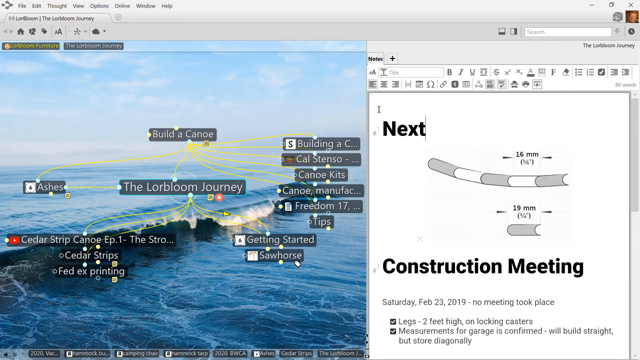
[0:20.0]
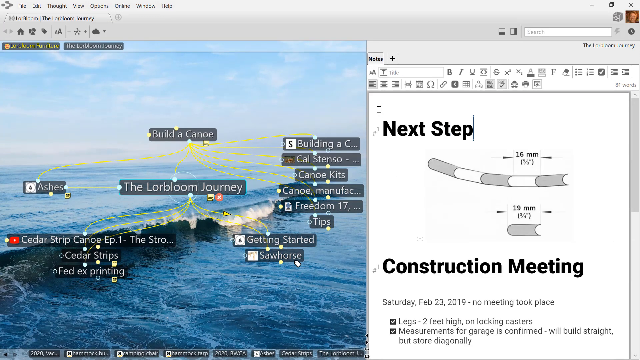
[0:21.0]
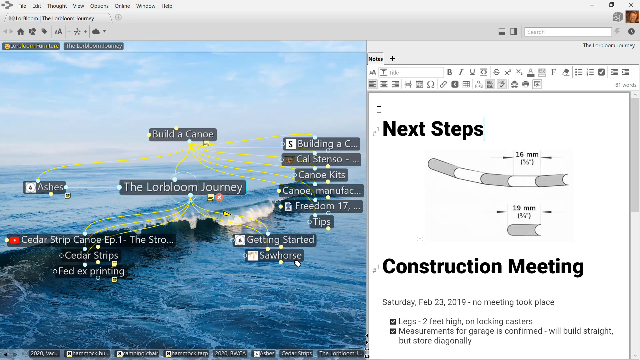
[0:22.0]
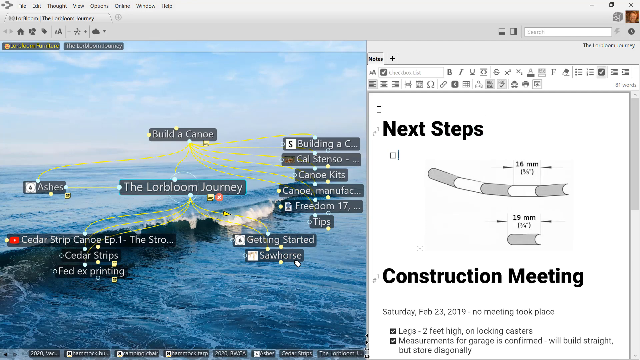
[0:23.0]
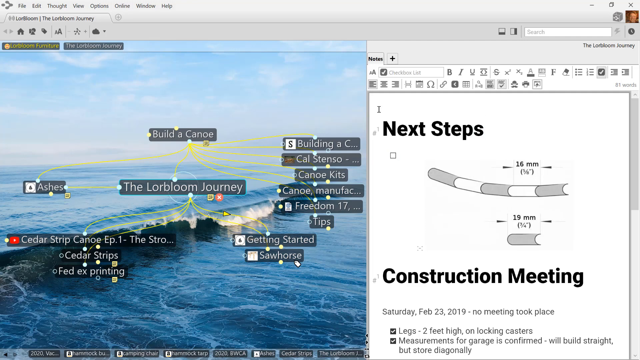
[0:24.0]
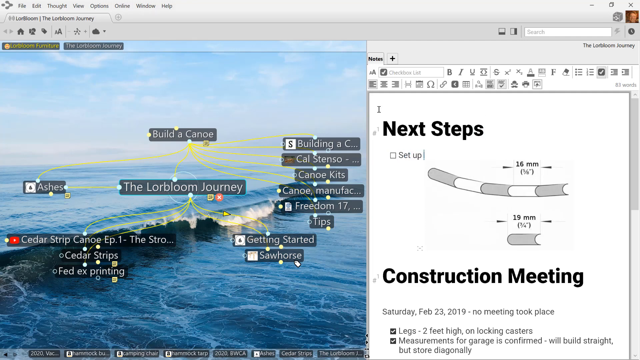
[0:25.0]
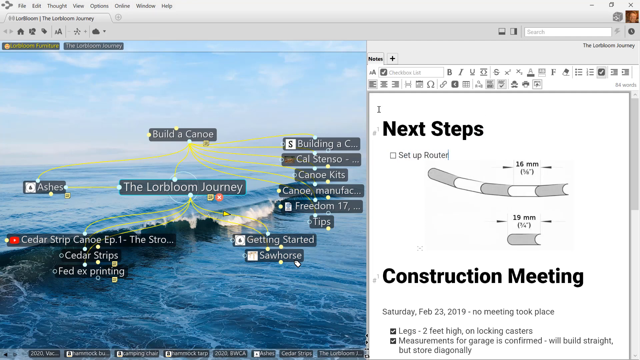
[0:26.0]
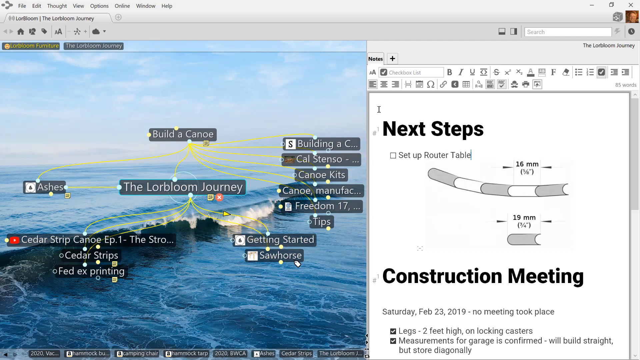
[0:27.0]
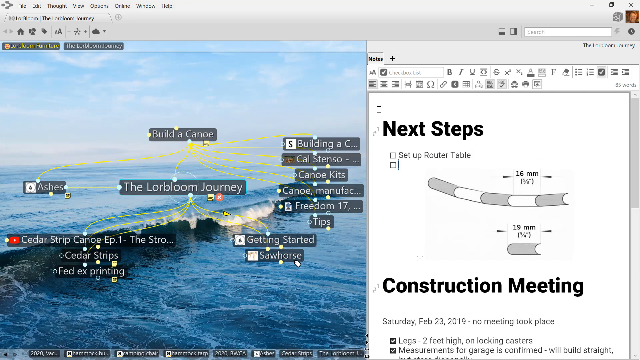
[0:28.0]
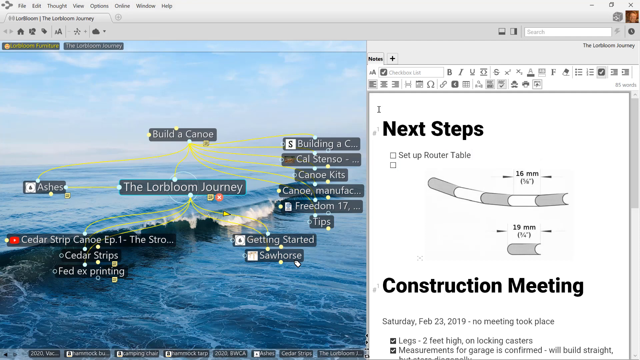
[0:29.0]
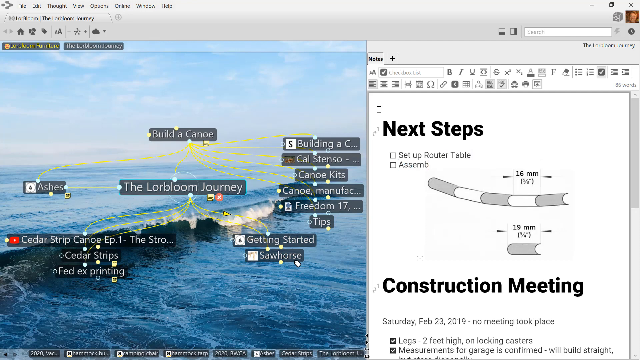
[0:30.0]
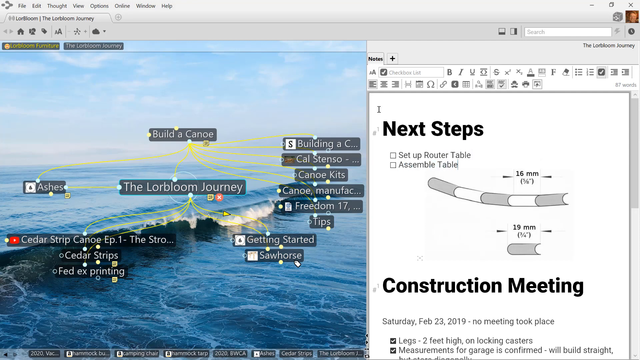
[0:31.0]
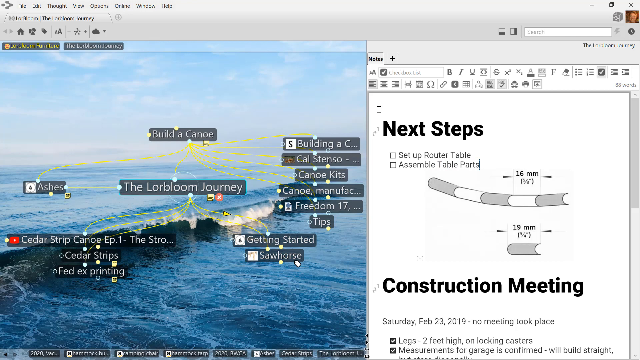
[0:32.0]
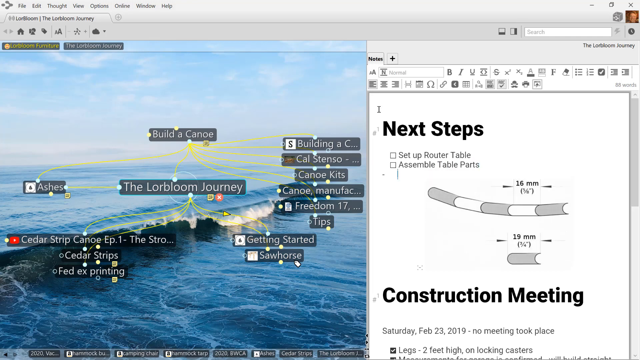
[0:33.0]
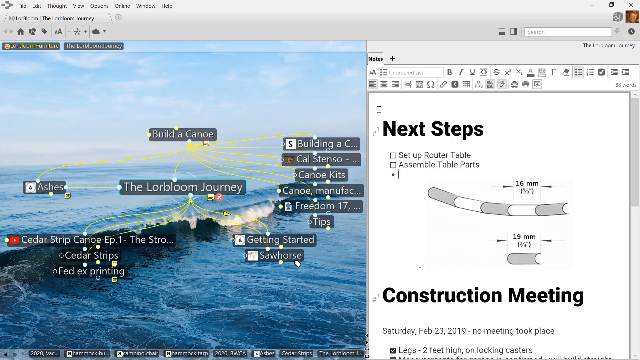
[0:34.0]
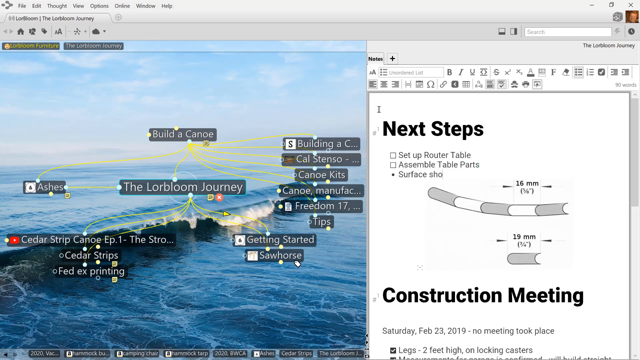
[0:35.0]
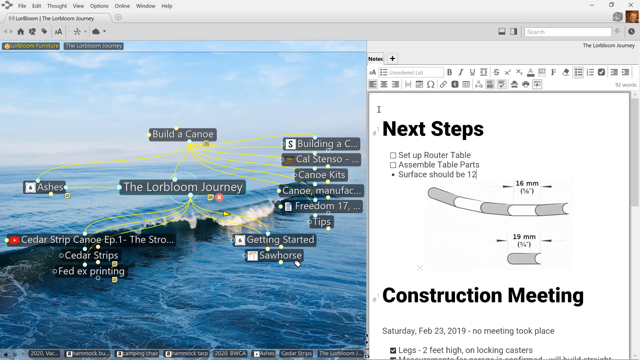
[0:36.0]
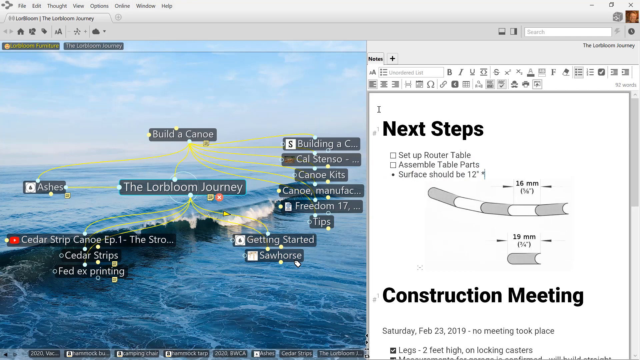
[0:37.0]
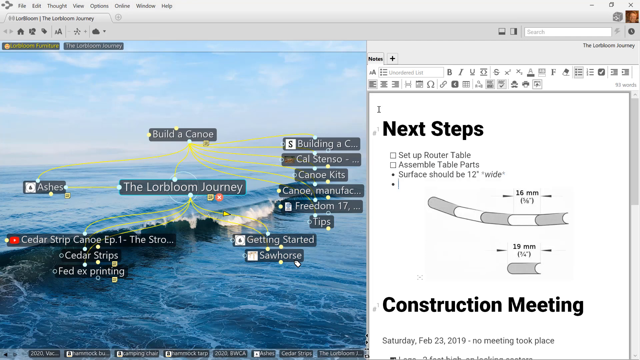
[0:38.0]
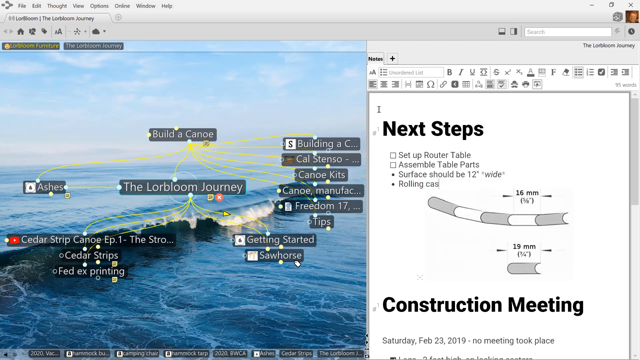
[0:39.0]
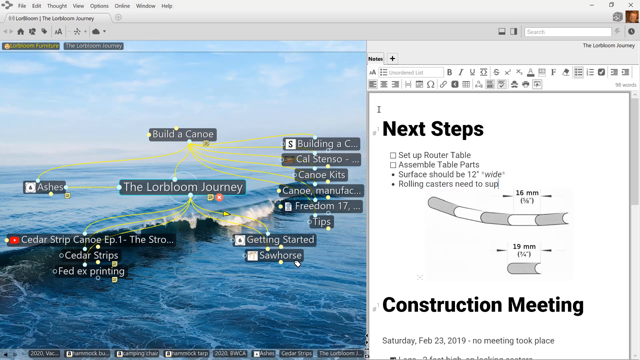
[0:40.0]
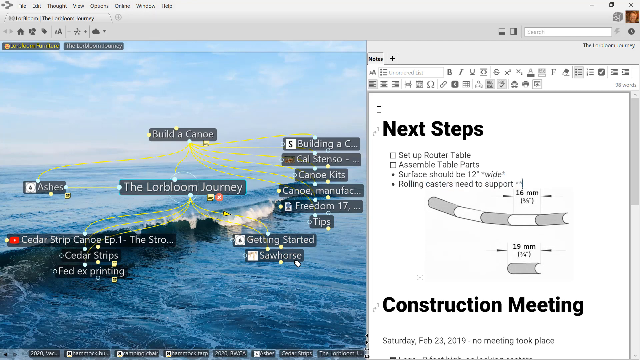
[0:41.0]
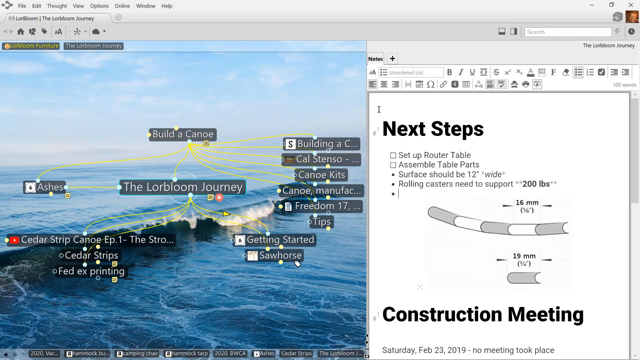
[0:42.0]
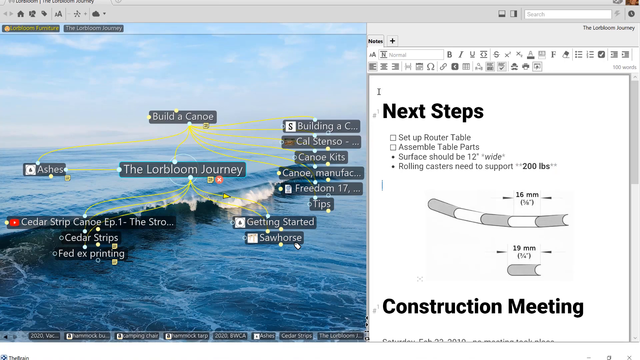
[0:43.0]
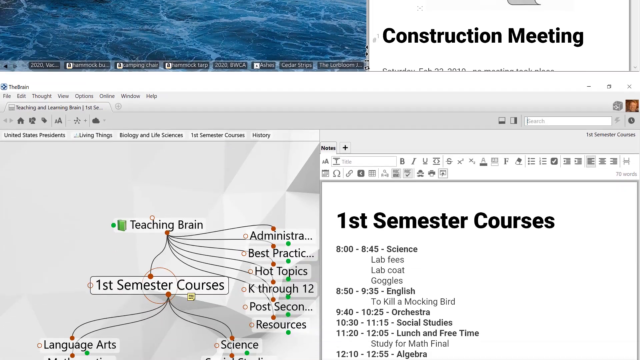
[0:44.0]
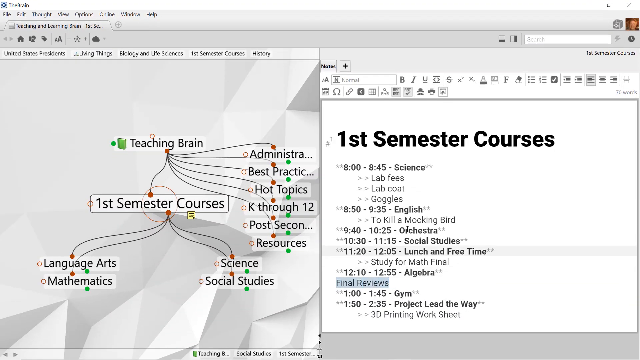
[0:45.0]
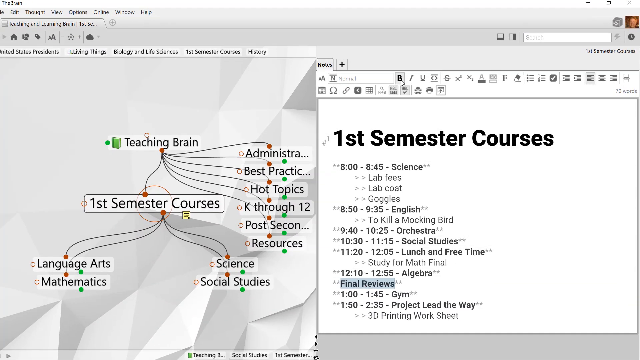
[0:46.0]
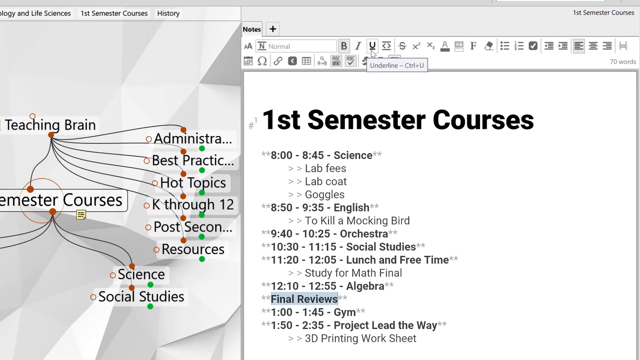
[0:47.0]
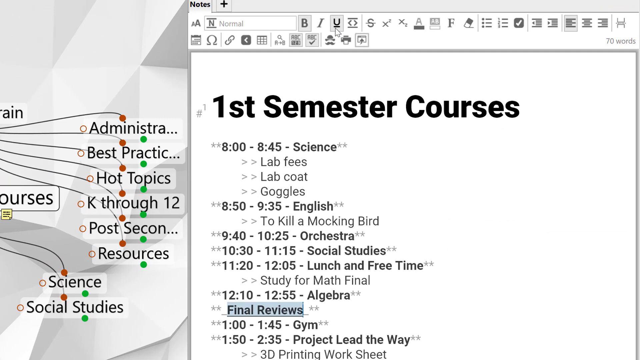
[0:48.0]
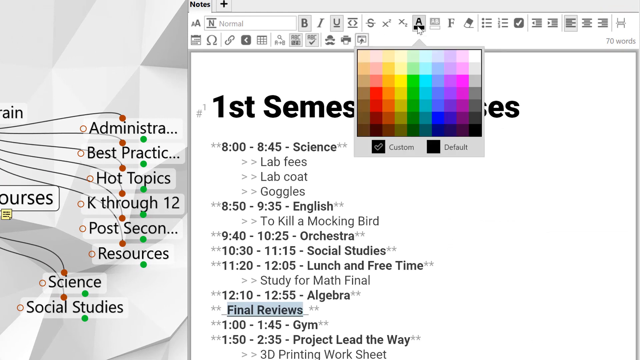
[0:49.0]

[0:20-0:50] A document with a lot of information is on screen. There is a diagram labelled "build a canoe" that almost looks like a barge, with yellow lines coming out from "lorblom journey". It looks like something out of the ocean: a long horizontal piece that looks like it is floating. There are probably eight or ten different pop-ups, including "building the canoe" and "canoe kids". A tab at the top with "file", "edit" and "thought" makes it look like this is being done in some kind of computer program. A split screen on the right side shows "next steps" being typed, followed by a bullet point "set up router table" and another reading "assemble table cards" and "surface should be 12". It looks like someone is building a step-by-step instruction manual for putting together the canoe. The view scrolls down to the brain, where the program says "teaching brain", with a bunch of lines branching out from it and a box underneath reading "first semester courses". On the right, the split screen shows notes reading "first semester courses". The user zooms in, hovers over the underlined text, goes into font color and changes part of it to a red font.